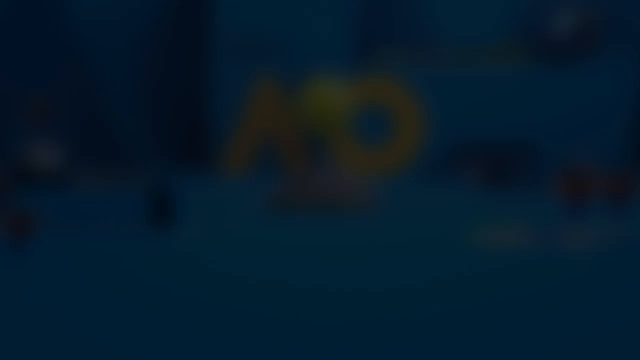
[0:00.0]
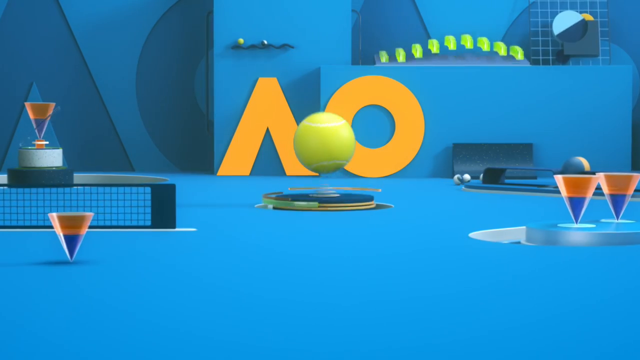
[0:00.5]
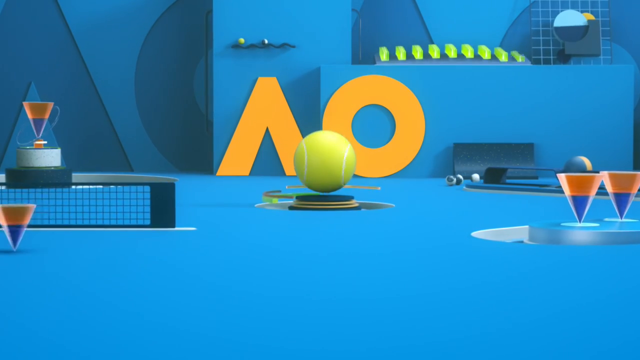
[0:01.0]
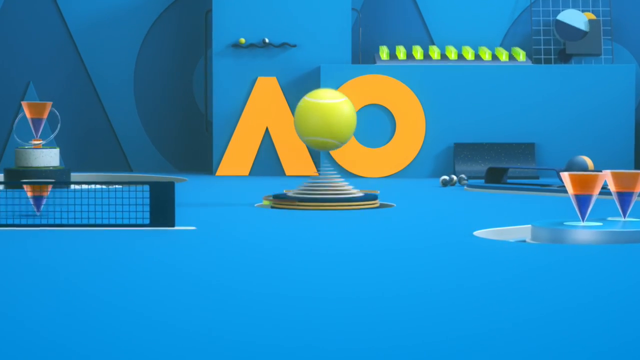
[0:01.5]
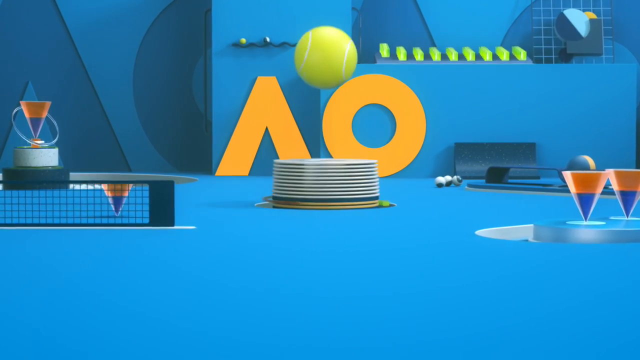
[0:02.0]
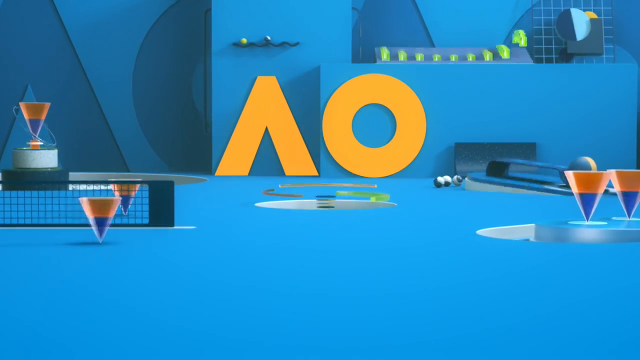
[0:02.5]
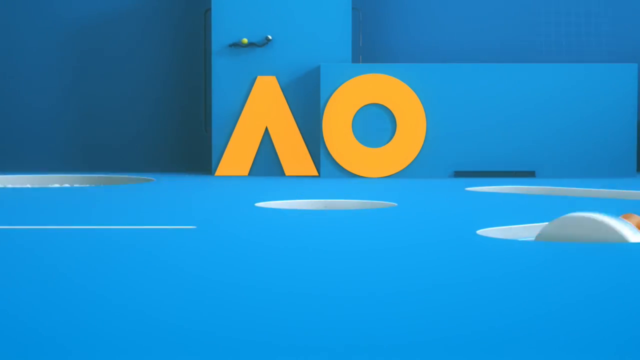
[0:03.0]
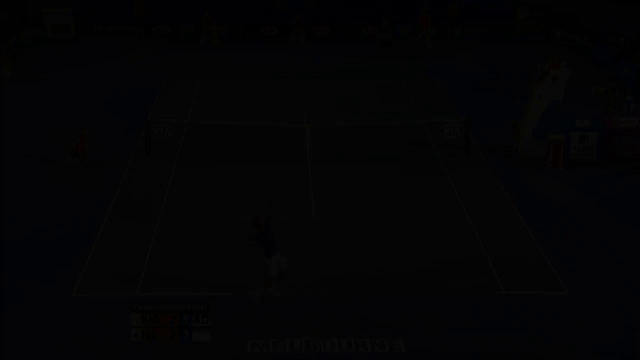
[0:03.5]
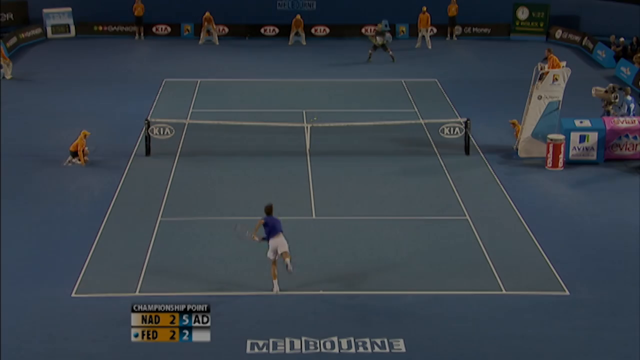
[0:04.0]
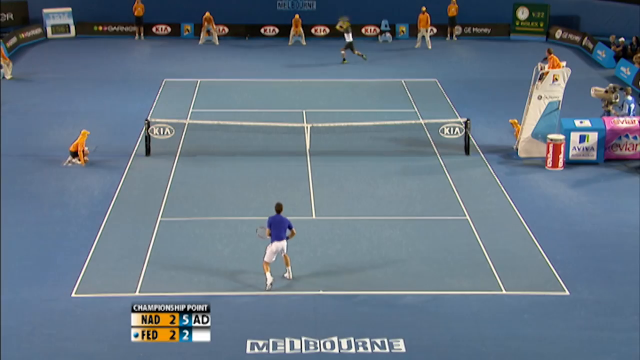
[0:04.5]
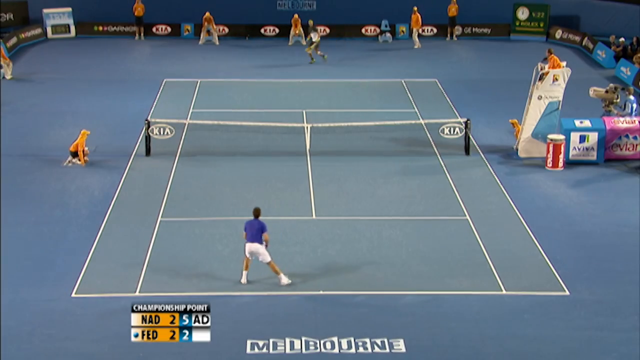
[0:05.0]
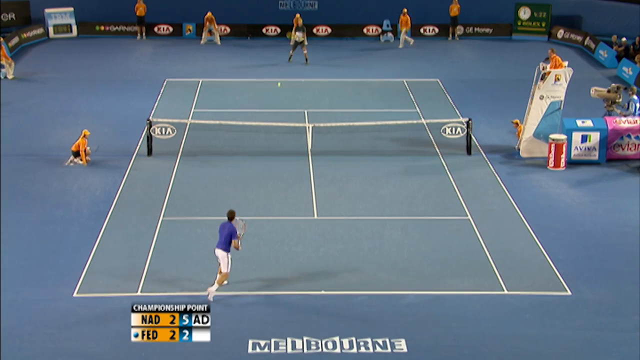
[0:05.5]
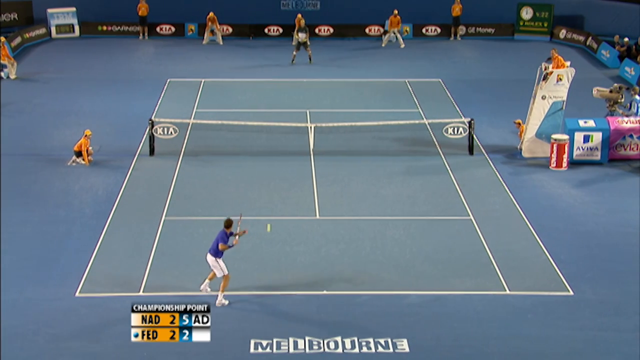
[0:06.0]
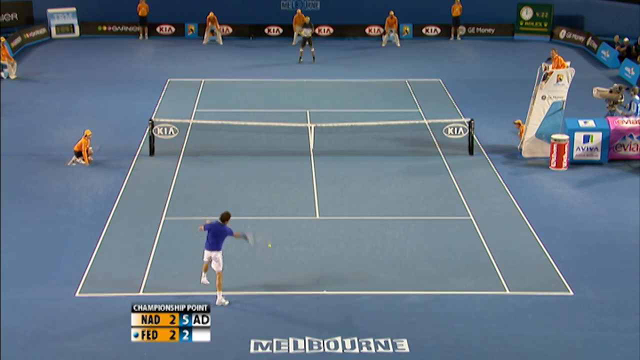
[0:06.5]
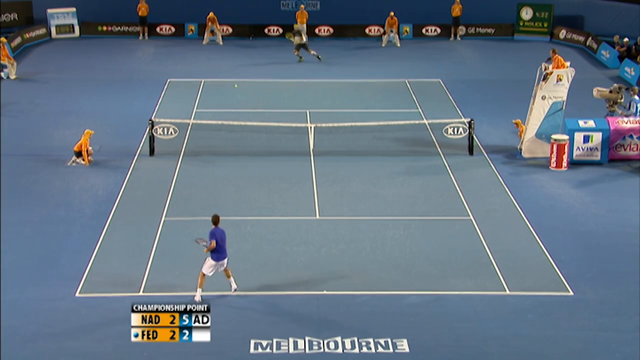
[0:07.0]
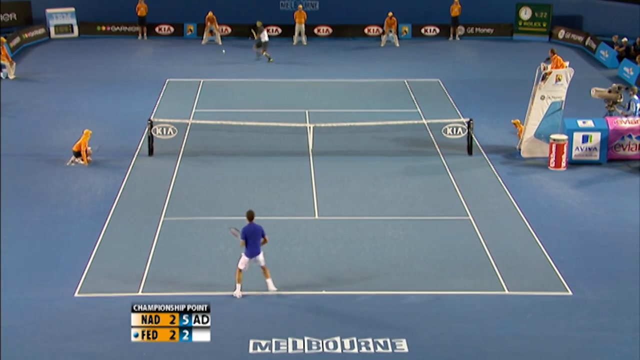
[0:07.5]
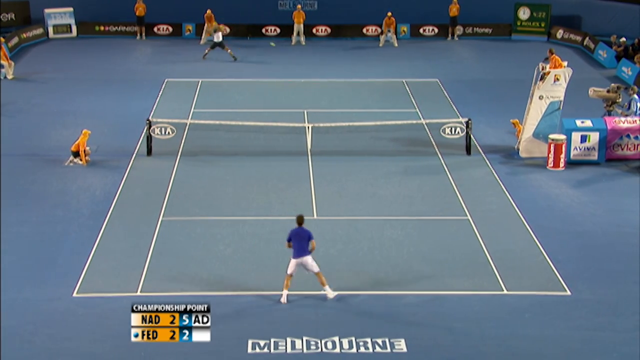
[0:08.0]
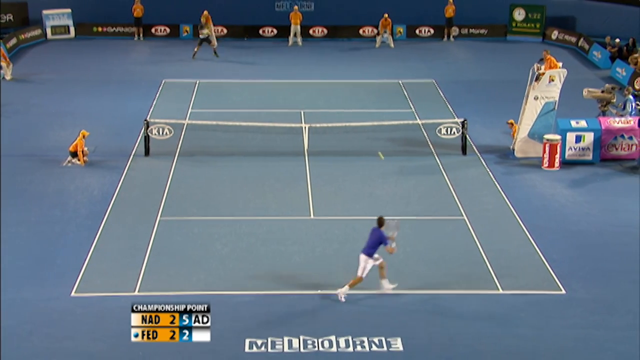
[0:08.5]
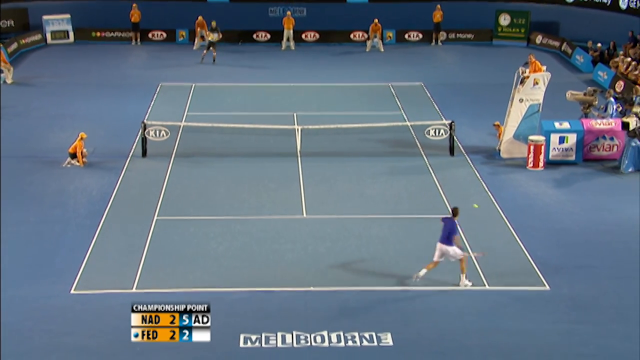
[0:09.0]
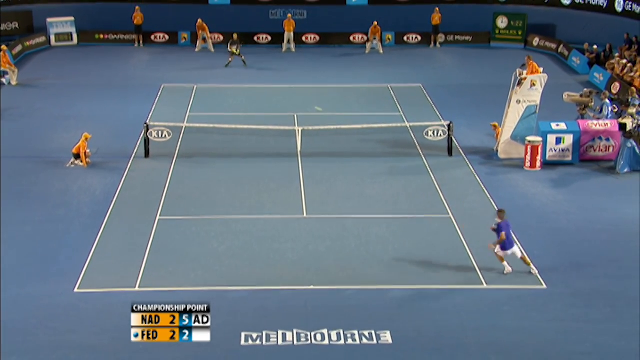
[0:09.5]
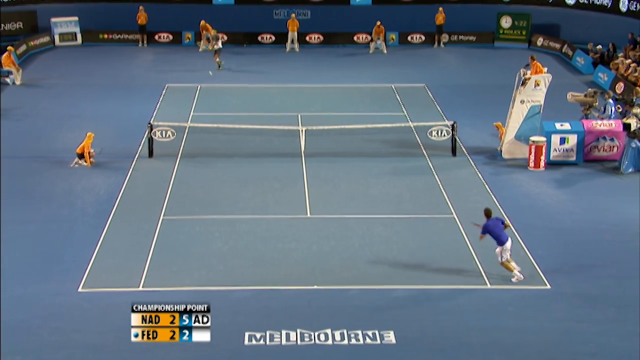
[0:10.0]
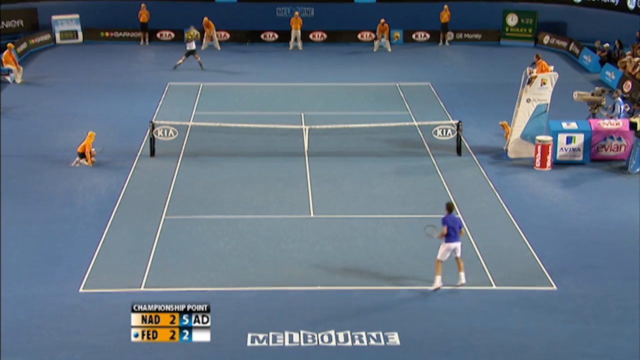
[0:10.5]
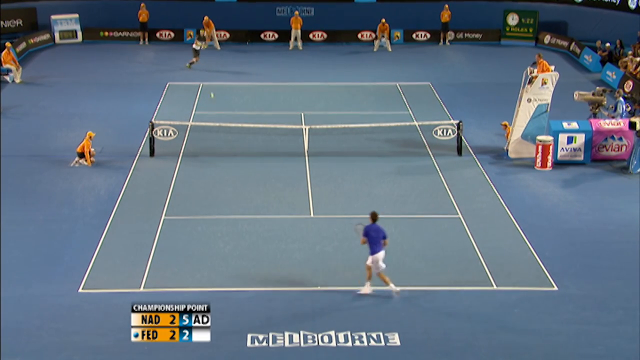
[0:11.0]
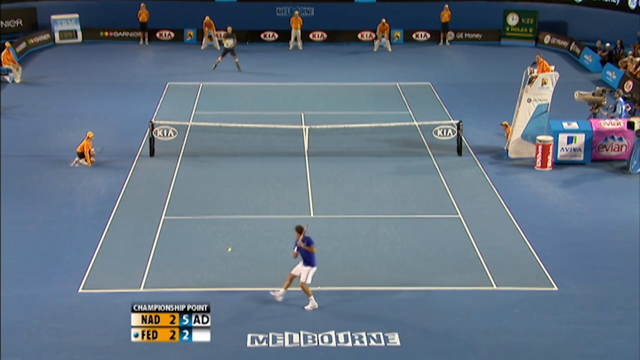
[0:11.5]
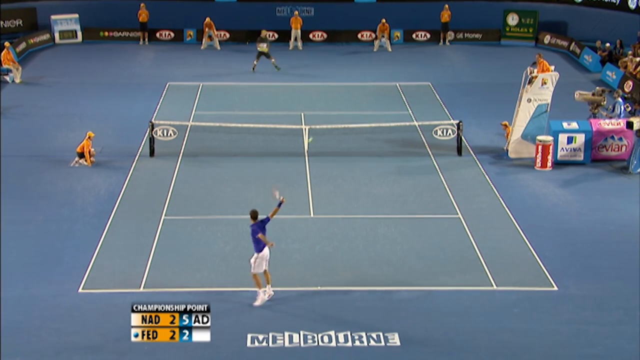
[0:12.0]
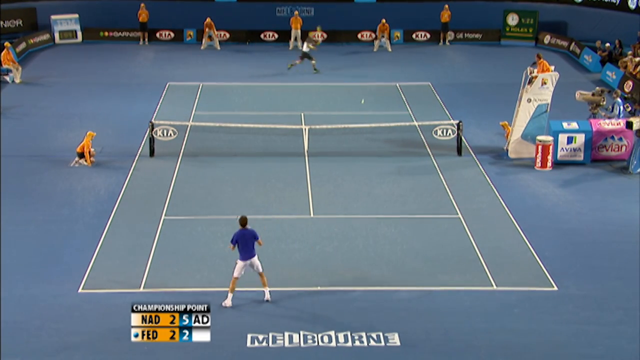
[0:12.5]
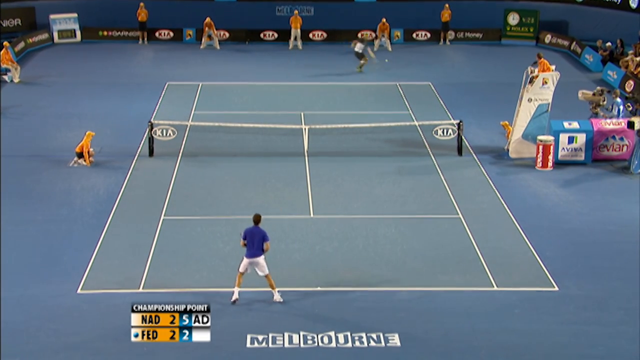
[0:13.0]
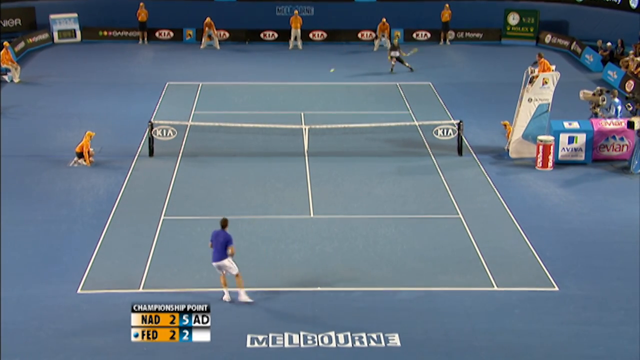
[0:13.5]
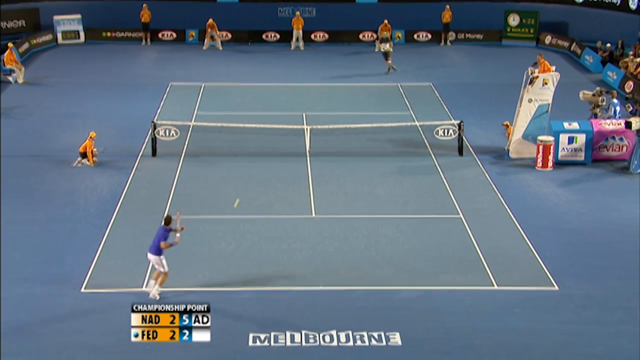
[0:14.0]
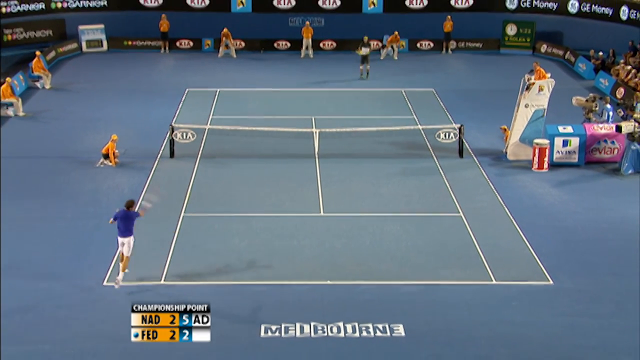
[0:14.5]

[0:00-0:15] The video opens with an introduction to a channel in yellow and blue colors. Two people are playing tennis. The player on the bottom wears a blue t-shirt, white shorts, white socks and white shoes. His opponent, on the top side, wears a black and white t-shirt, black shorts, black and white socks and black shoes. The court has a blue ground with white painted lines. Sponsors are shown all around the field, reading "KIA". The referee is on the right side, set in a higher place to observe the game. A ball boy is on the left side with one knee down, waiting to catch the ball. Text on the bottom reads "Melbourne", and on the bottom left there is score text beginning "championship" and including "FED 2 2". The players swing fiercely, going toe to toe, and no one scores a point.